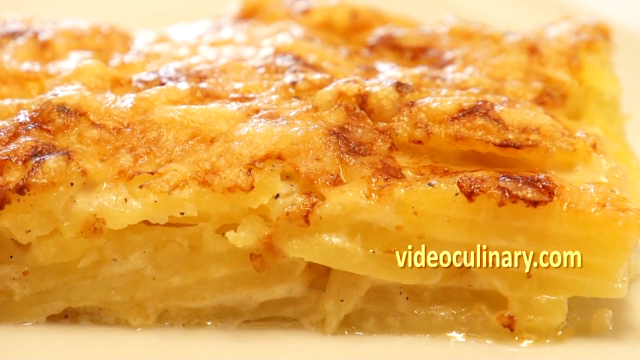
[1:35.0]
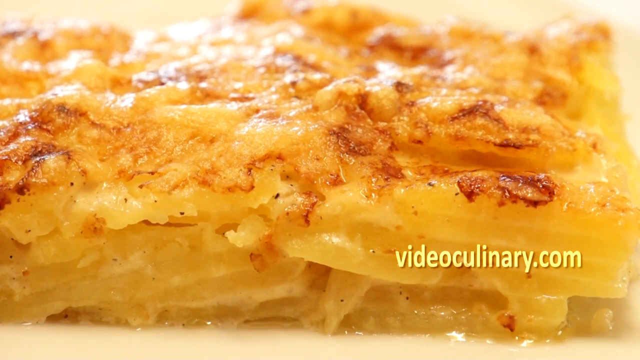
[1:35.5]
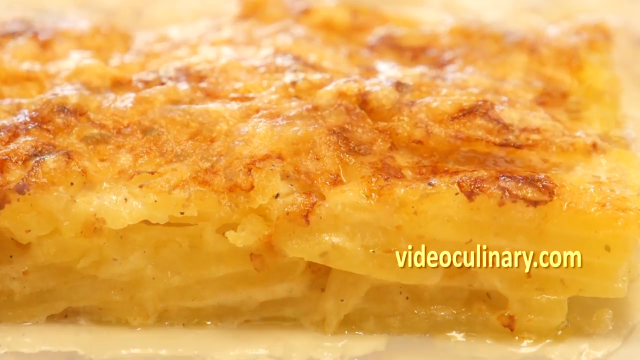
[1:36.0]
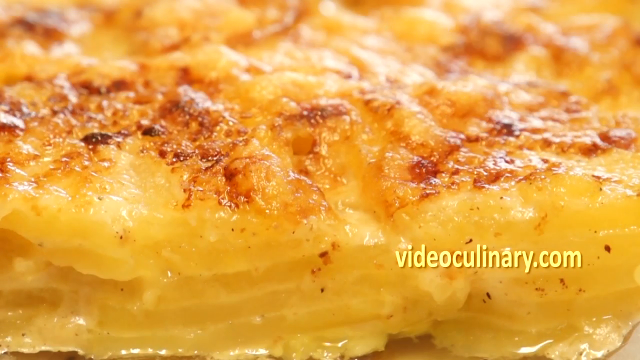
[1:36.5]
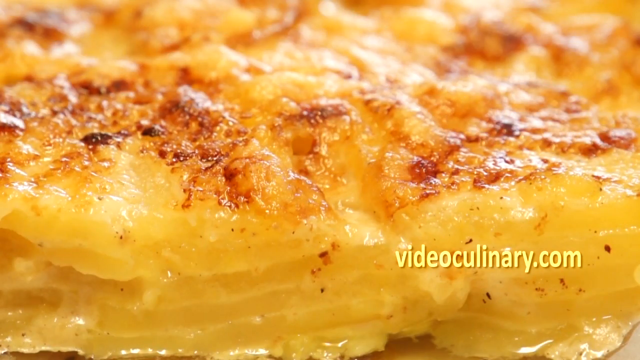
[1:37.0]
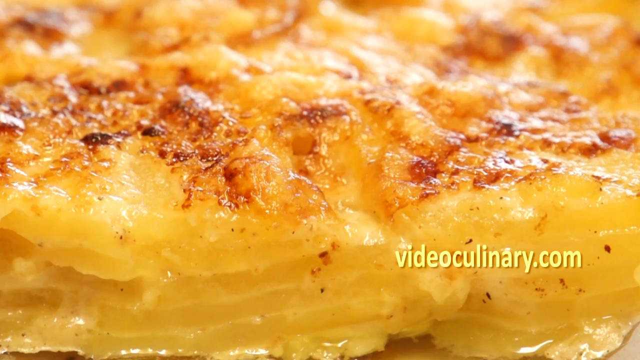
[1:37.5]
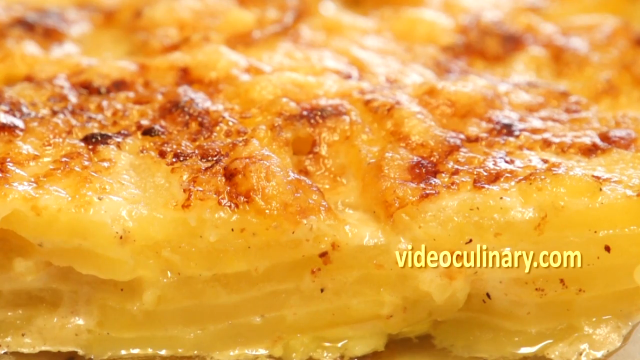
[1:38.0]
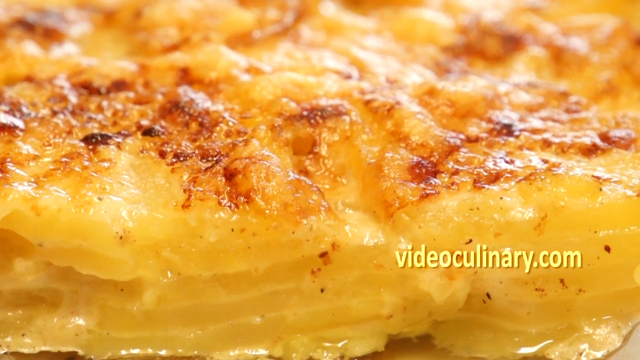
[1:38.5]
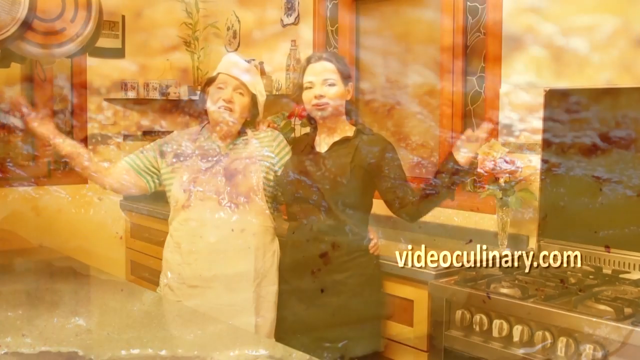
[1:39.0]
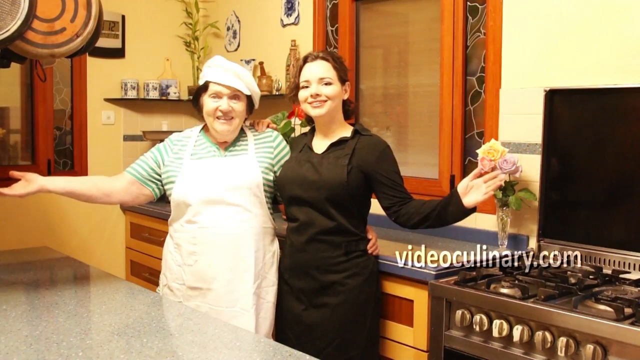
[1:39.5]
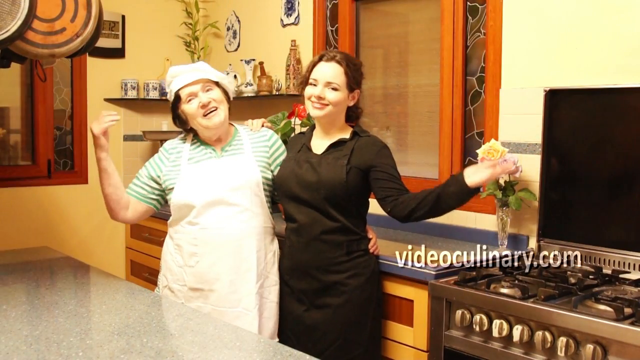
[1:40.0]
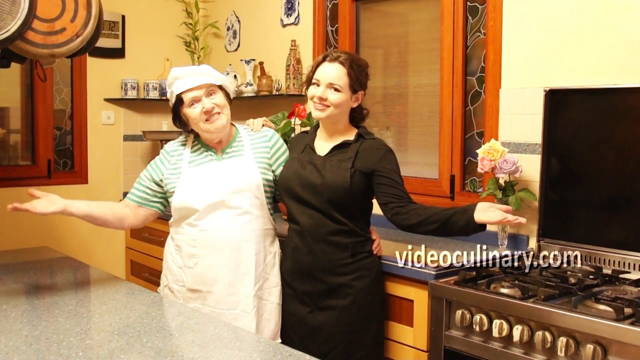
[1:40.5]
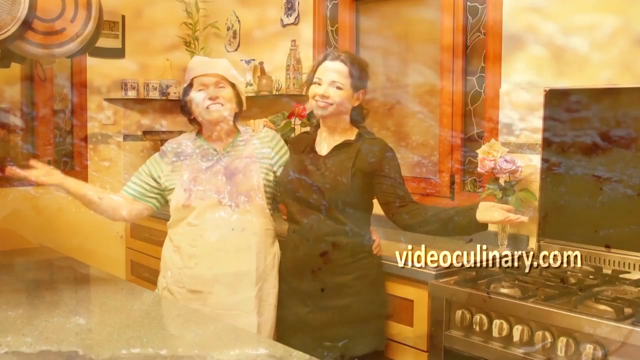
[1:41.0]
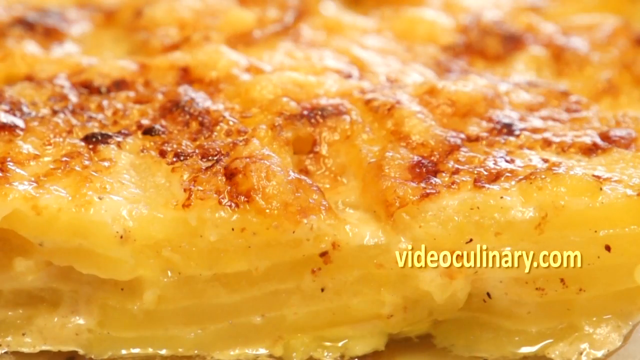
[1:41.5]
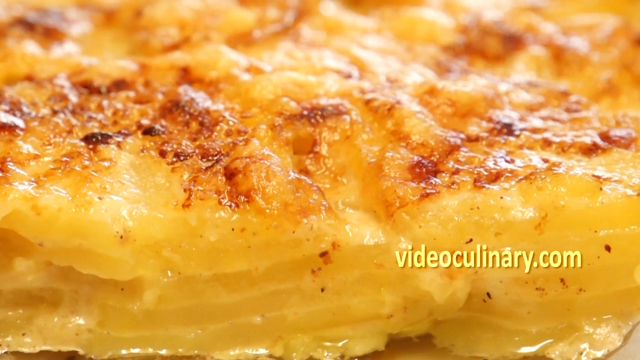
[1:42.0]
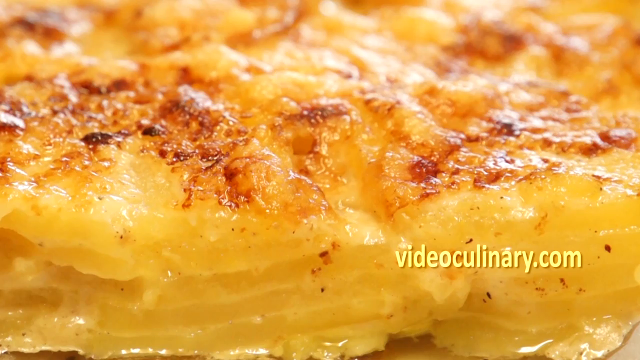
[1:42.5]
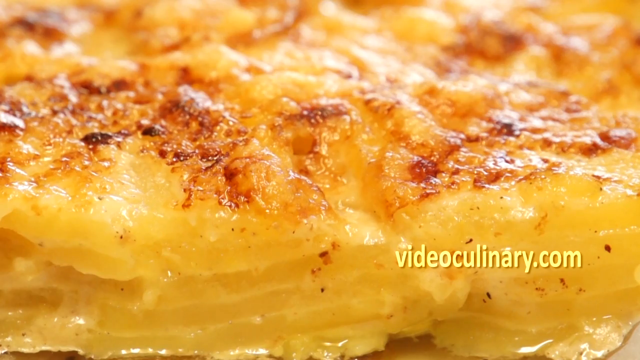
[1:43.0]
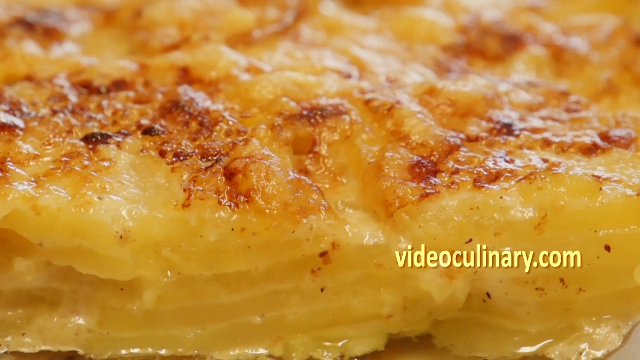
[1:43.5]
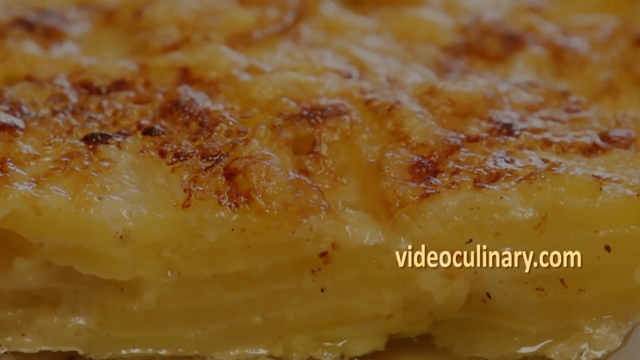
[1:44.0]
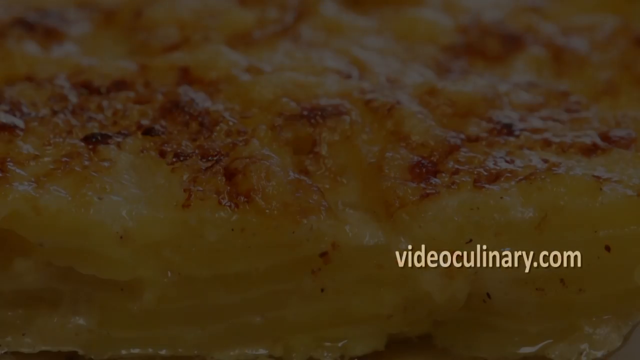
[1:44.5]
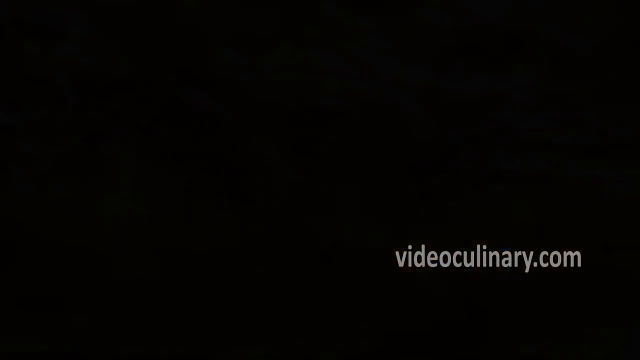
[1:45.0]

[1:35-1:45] A close-up shows the potato gratin, brown on top with the light hitting it; it looks pretty cooked and is more yellow at the bottom. Another shot from a different angle looks much the same, brown on top with different layers of potatoes underneath. Then the shot cuts to two women in a kitchen with various countertops and a stove on the right. The older woman on the left wears a white hat and a white apron; the younger woman on the right, possibly in her 30s, wears black with a black apron. Both gesture and smile toward the camera, with their arms around each other's shoulders and their other hands gestured out to the side. Another close-up shows the potato gratin, brown on top and more yellowish toward the bottom.